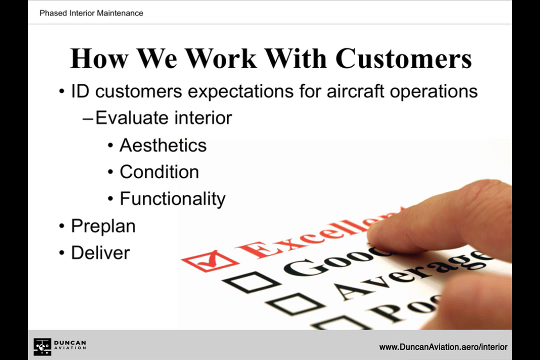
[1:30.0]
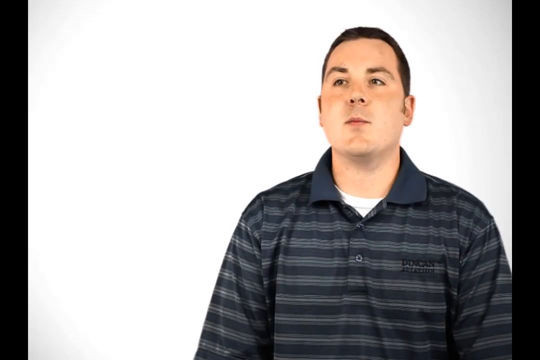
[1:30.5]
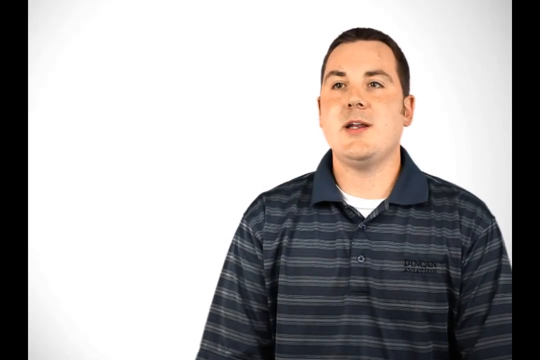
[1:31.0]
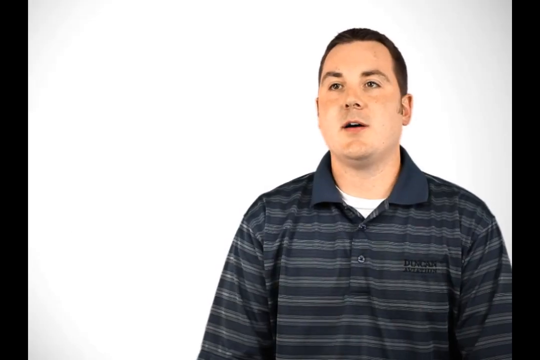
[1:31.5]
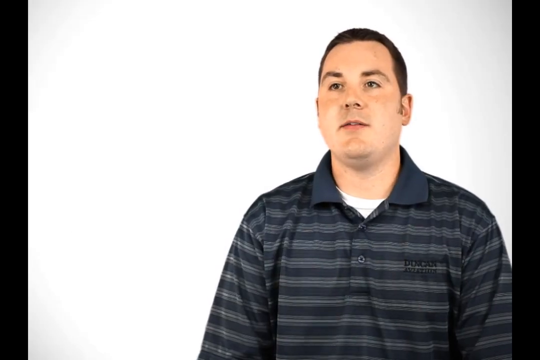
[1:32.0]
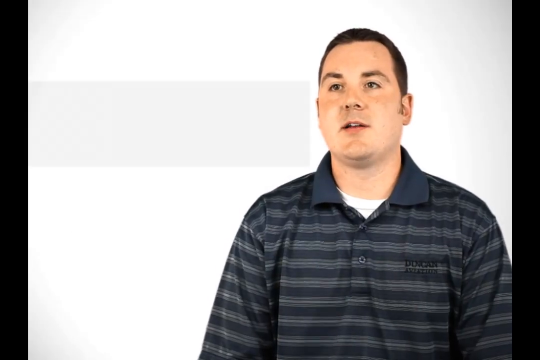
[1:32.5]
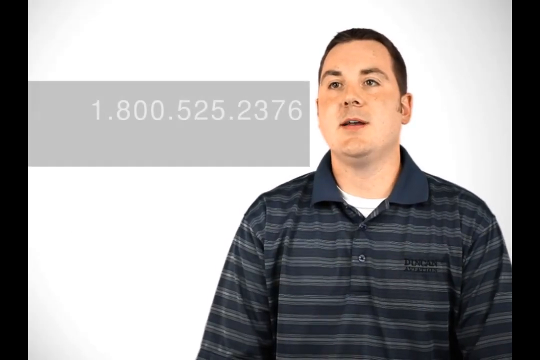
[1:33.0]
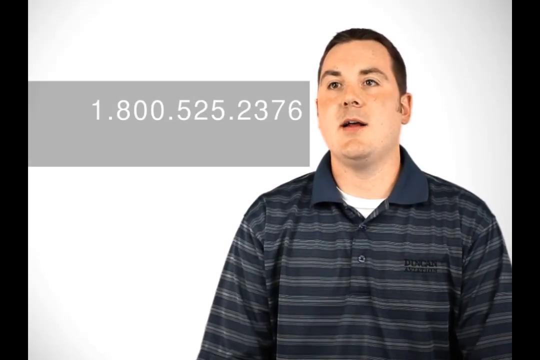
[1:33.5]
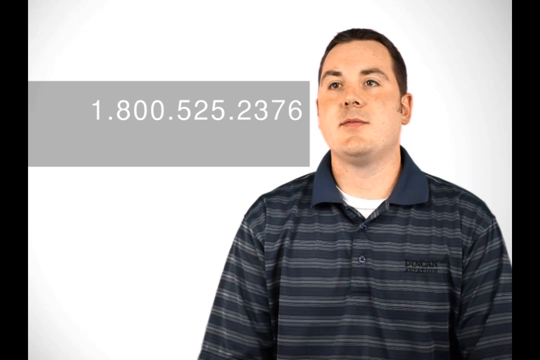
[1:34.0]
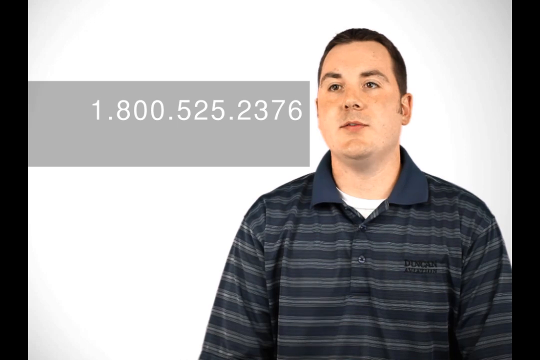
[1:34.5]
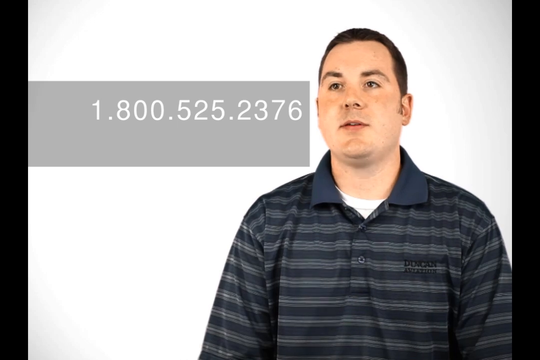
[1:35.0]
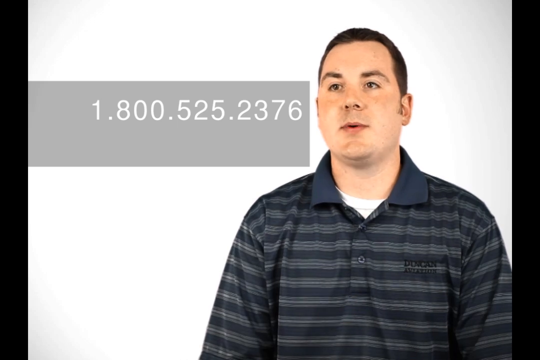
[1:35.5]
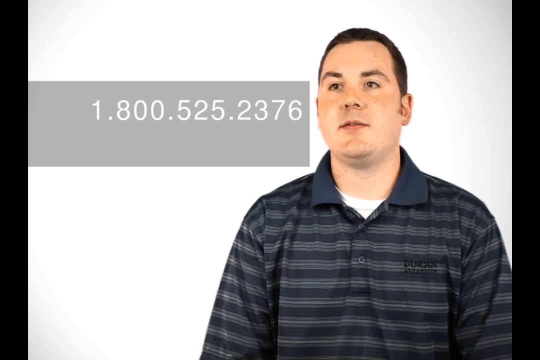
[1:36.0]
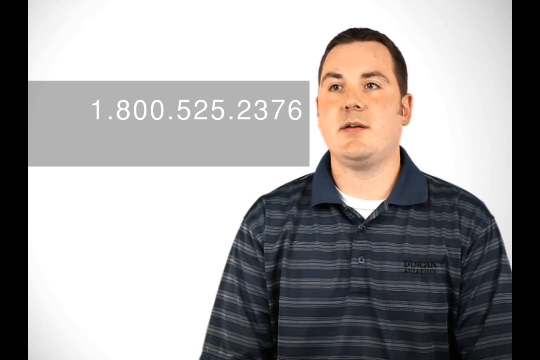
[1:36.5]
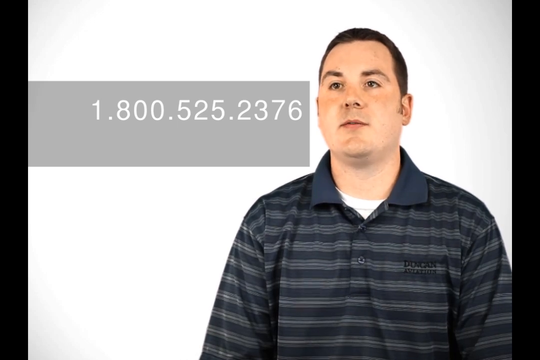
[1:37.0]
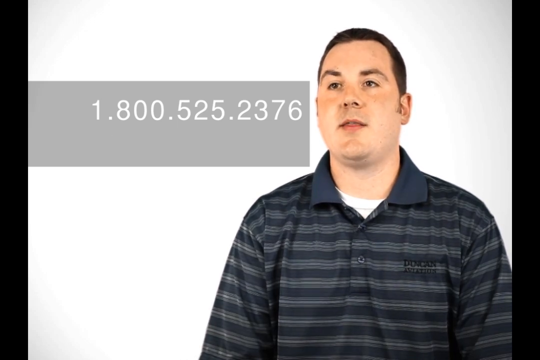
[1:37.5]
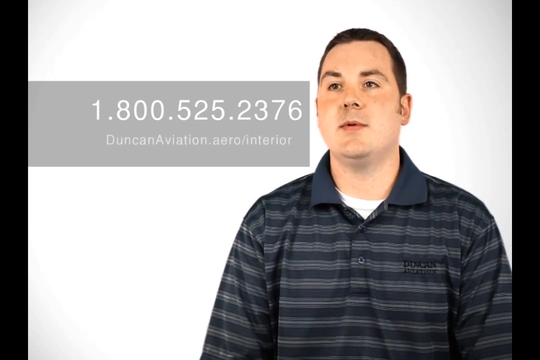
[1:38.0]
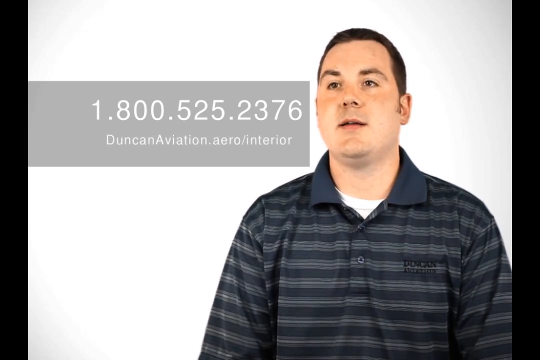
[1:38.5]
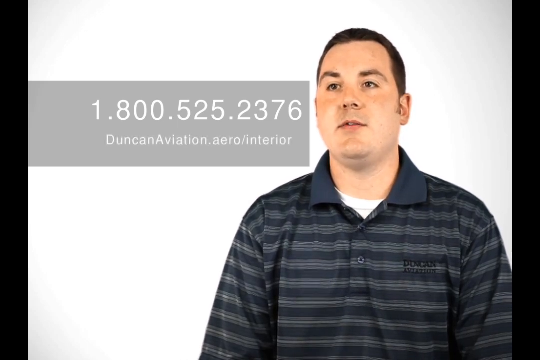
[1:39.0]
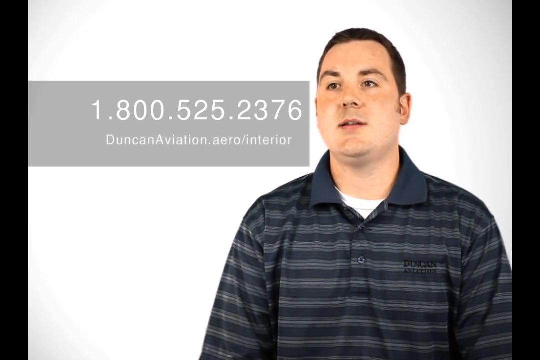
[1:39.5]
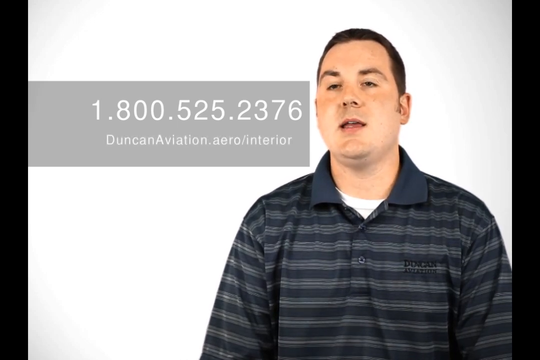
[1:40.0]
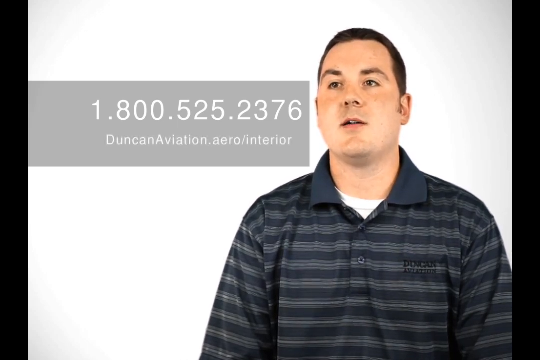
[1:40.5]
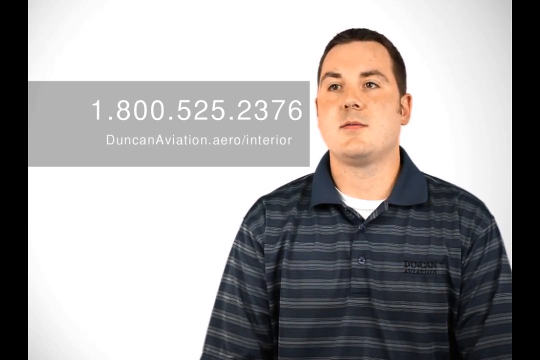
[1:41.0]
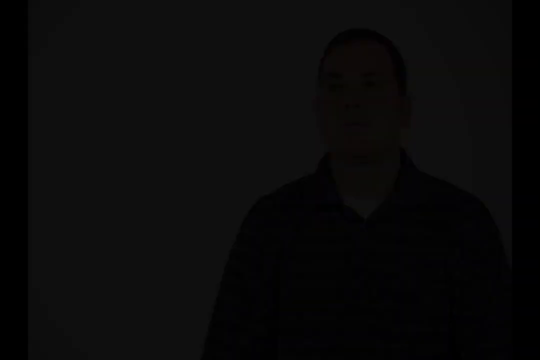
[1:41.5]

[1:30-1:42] The man from the beginning of the video is being interviewed. His name is put up, along with text reading "Duncan Aviation phase interior maintenance." A phone number appears in white print in a gray rectangular box beside his head at the top: "1.800.525.2376." He wears a gray and navy striped polo shirt with a white shirt underneath and has brown hair. He is Caucasian and kind of robust looking, not real thin.